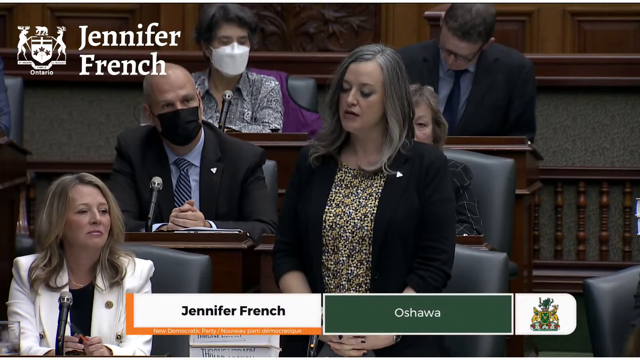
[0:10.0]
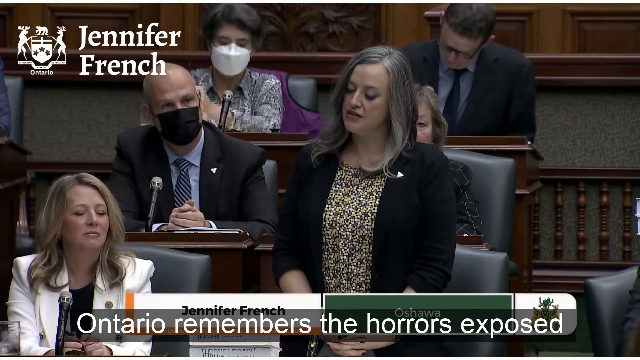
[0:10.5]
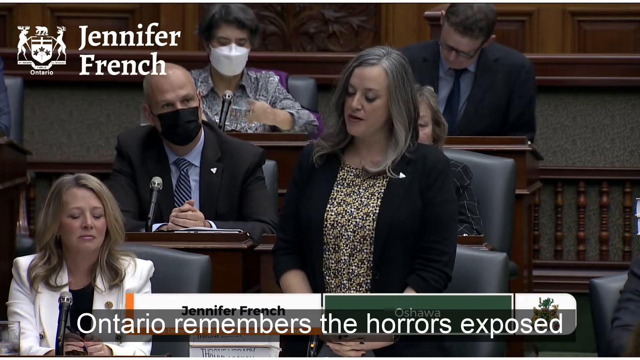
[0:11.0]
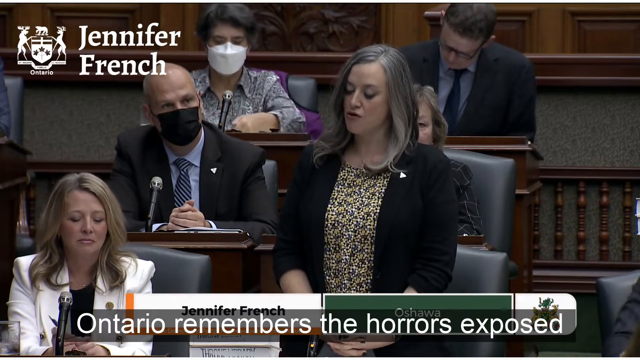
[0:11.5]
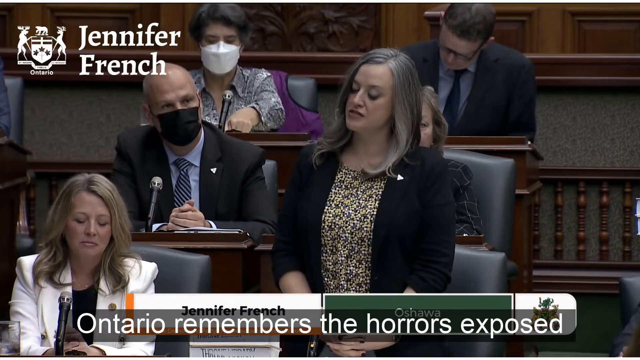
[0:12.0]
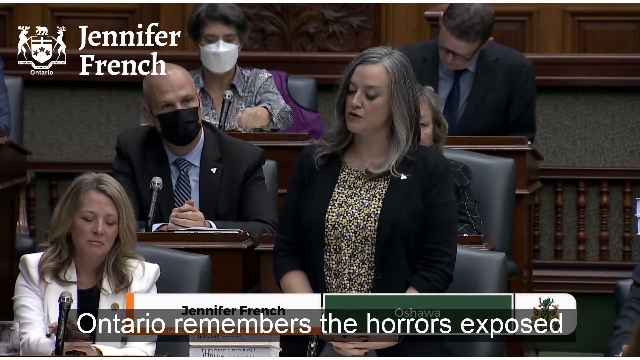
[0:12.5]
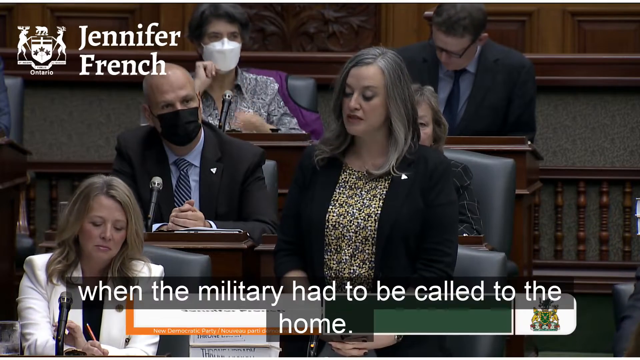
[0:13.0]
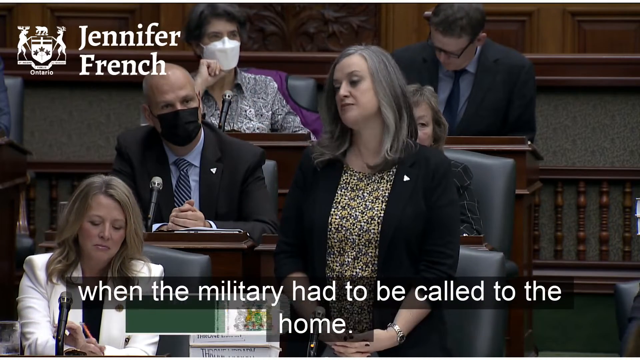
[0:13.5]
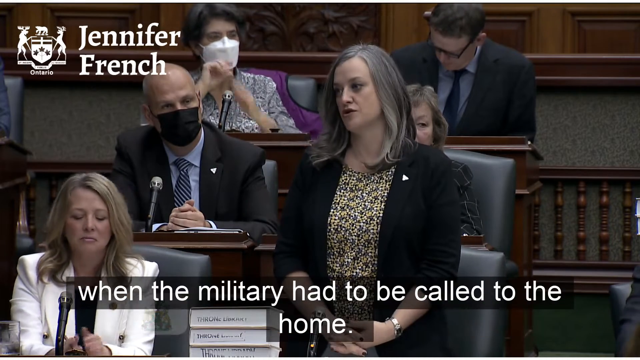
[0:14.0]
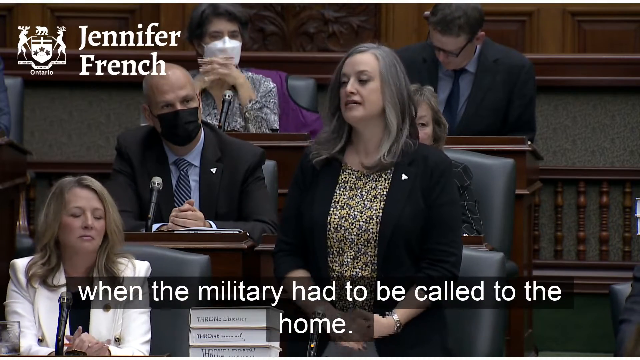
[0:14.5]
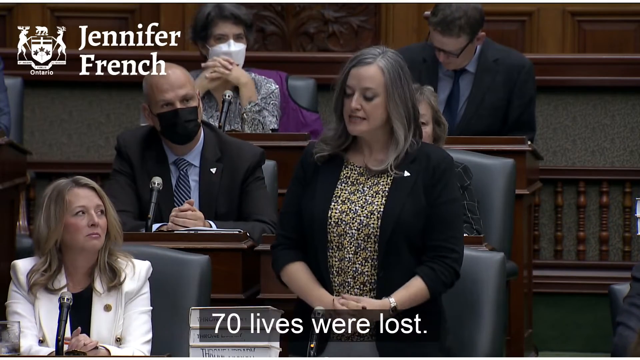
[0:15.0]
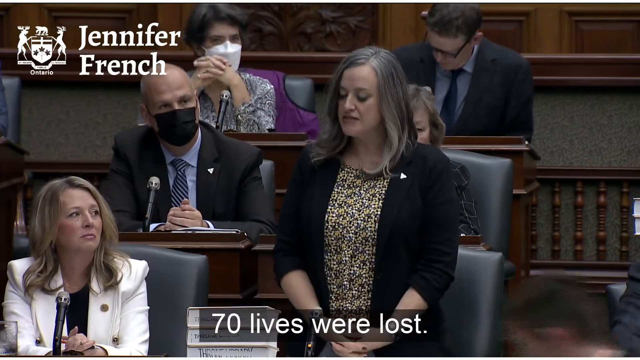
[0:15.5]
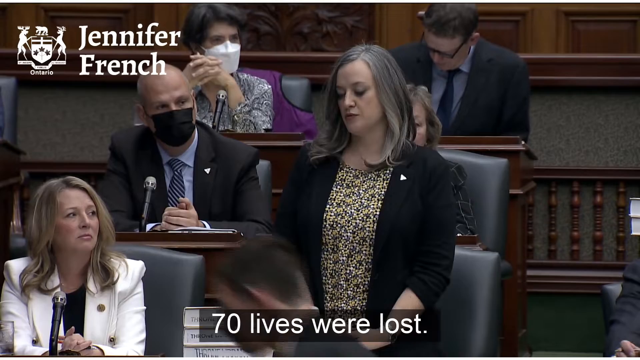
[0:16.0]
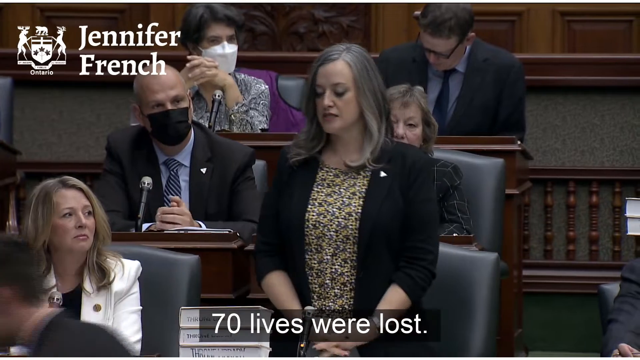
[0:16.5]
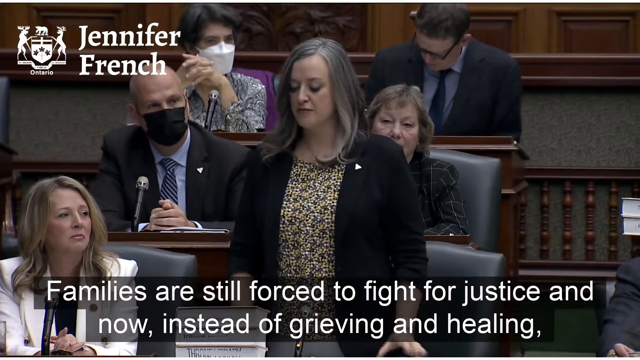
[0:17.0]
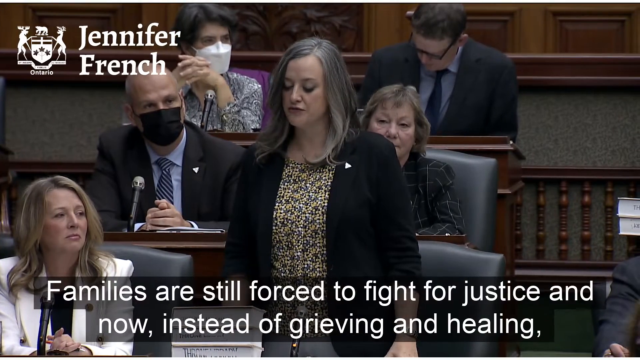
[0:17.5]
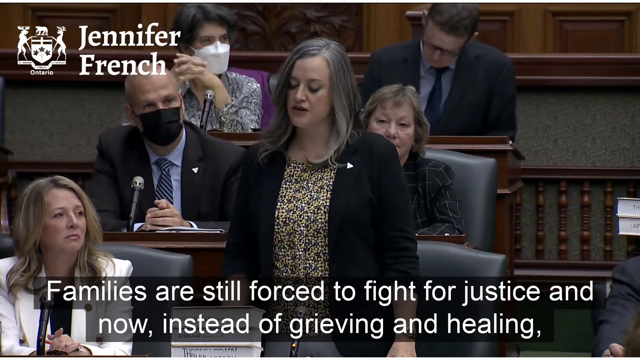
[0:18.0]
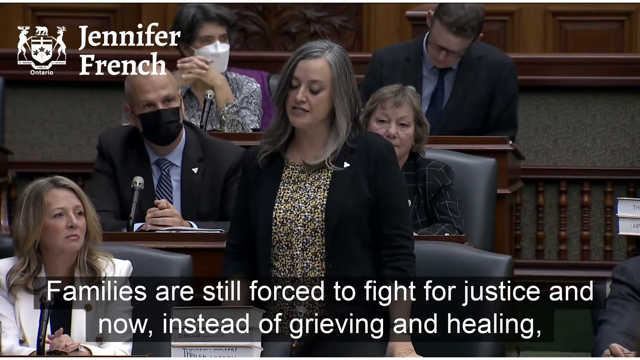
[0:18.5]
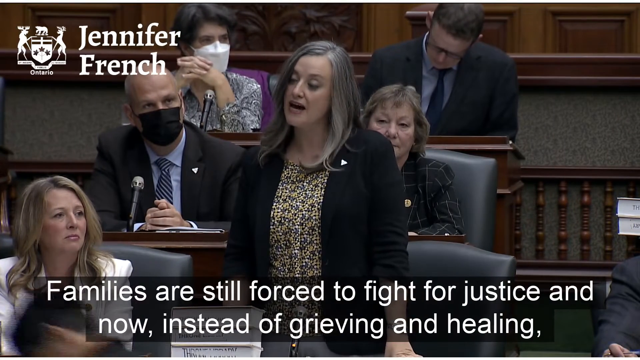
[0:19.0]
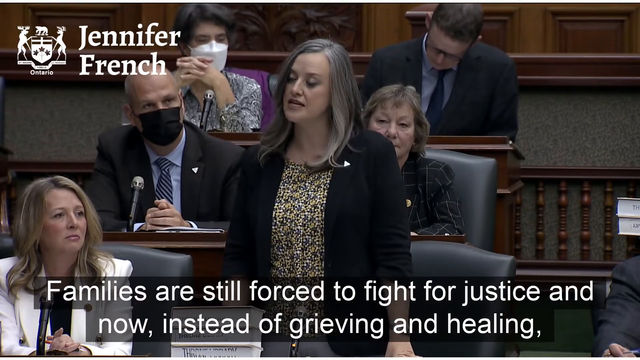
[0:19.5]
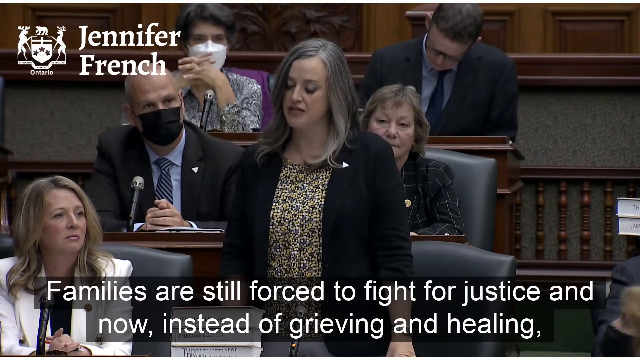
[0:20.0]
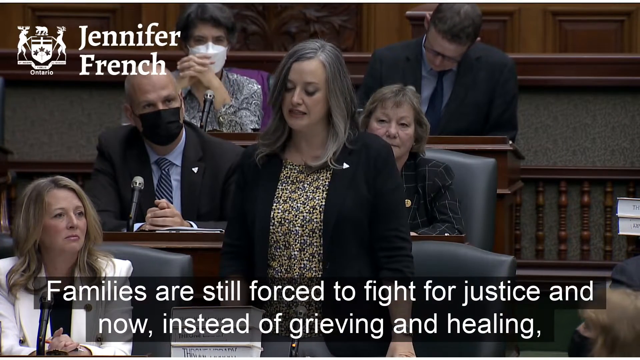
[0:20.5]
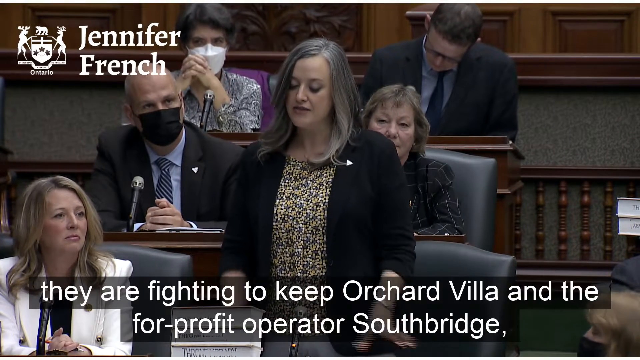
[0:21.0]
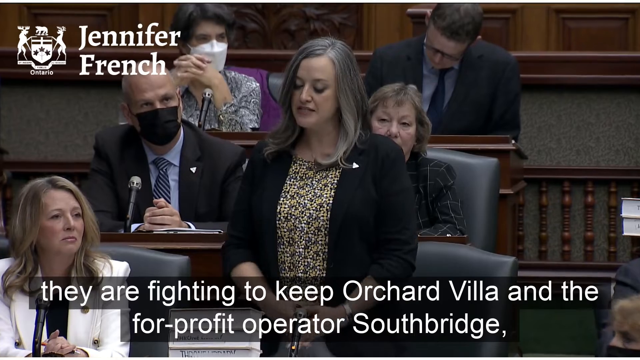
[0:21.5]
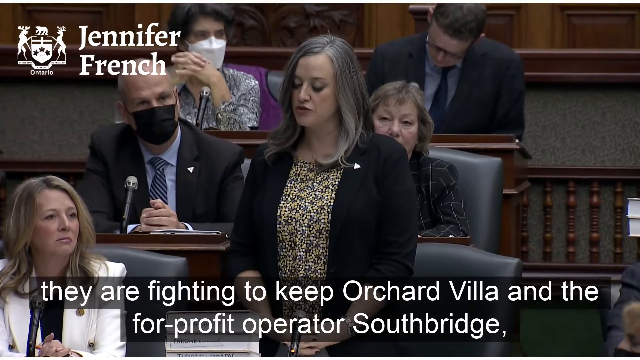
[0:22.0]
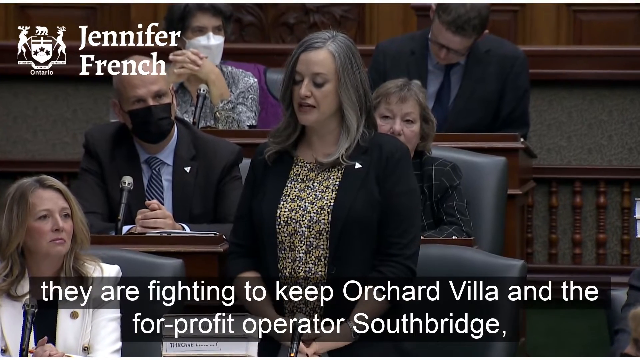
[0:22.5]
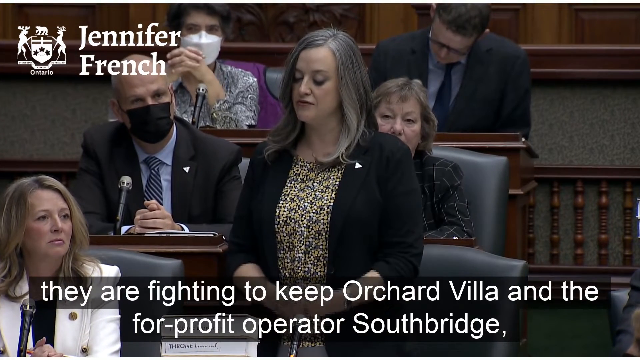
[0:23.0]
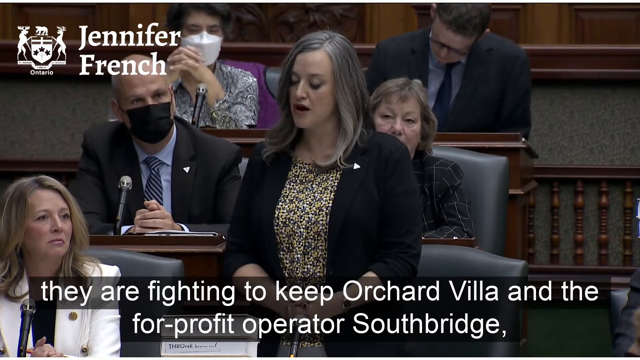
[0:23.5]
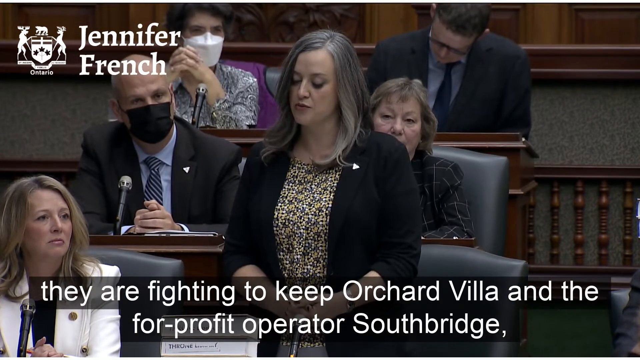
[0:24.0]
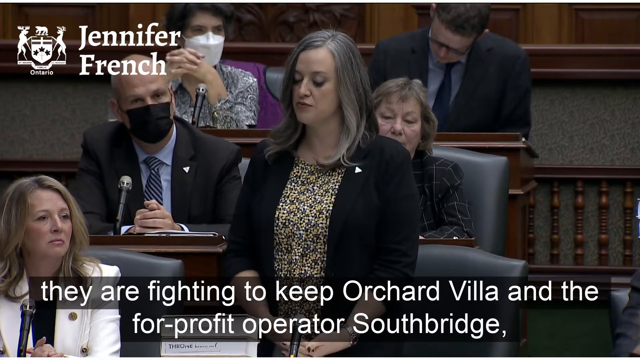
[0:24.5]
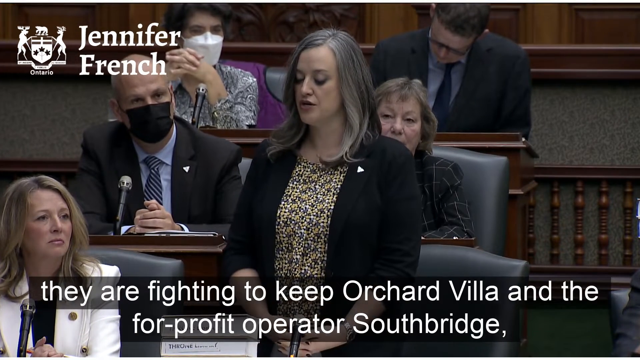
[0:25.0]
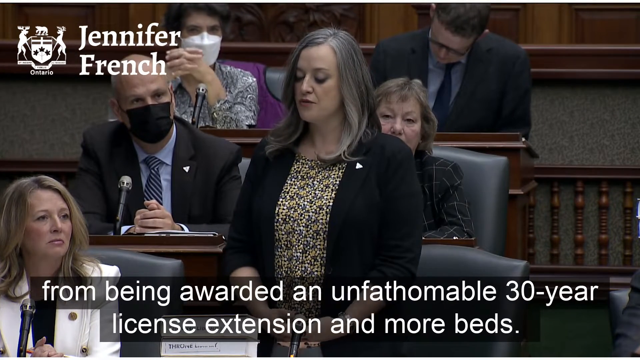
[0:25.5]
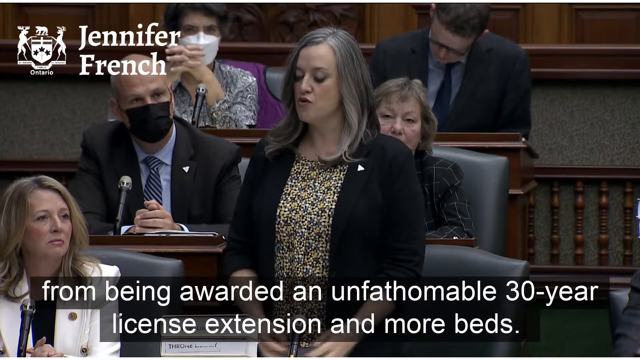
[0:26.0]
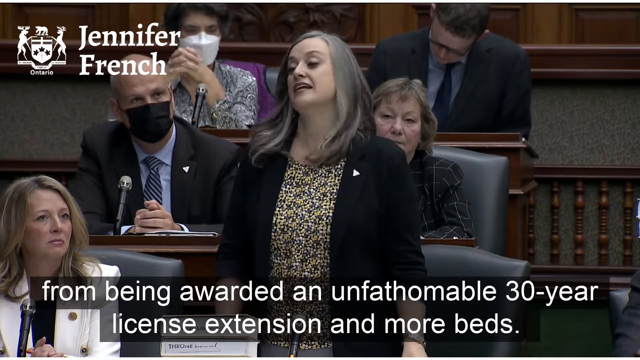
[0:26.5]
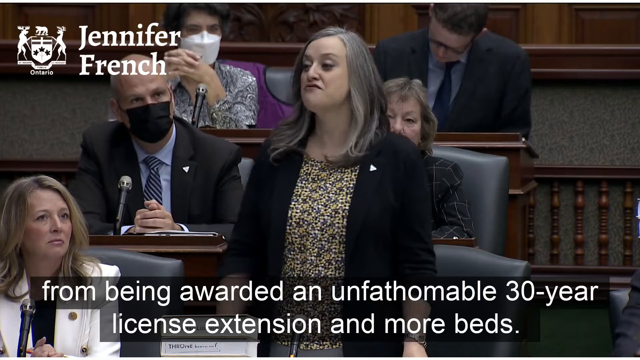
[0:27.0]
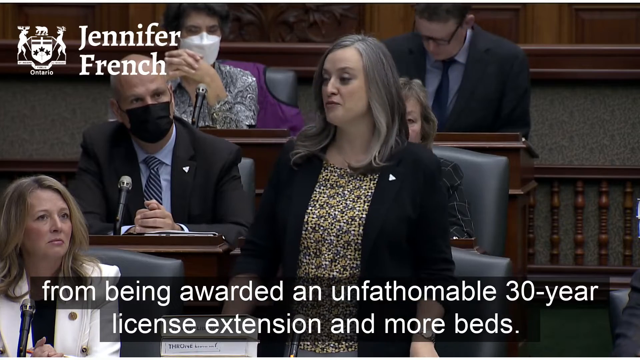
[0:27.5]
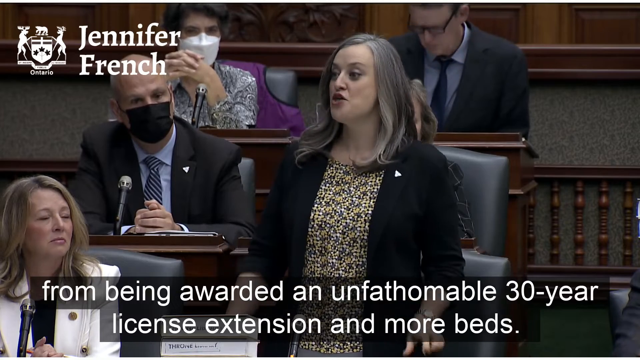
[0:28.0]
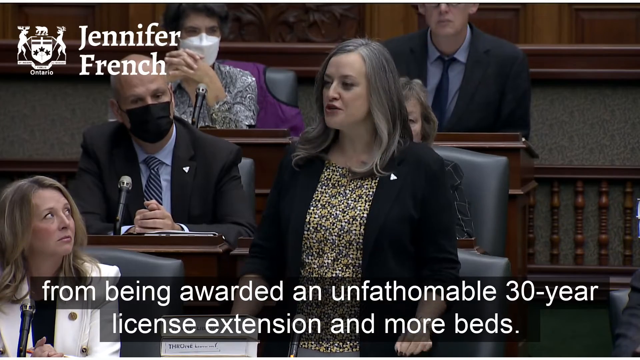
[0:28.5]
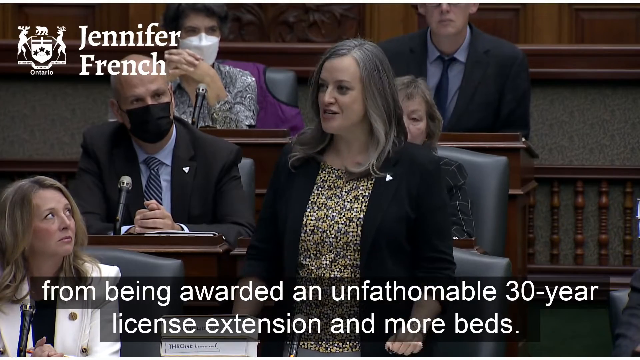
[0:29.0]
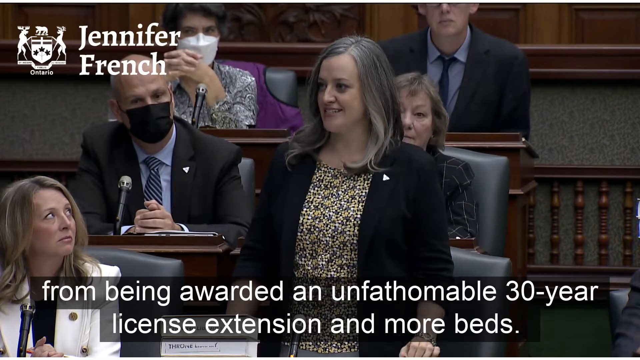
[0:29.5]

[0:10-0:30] A woman stands at her desk, wearing a flowered print top with a black jacket; she has below-shoulder-length grey hair parted to the side. To the left is a woman with blonde hair in a white business jacket. Behind her is a bald man in a suit wearing a black face mask, and behind him is a woman with short brown hair in a flowered button-down business top. Directly behind the standing woman is a woman with short brown hair in a plaid jacket, and behind her is a man with short brown hair and glasses wearing a suit. At the bottom of the screen, text reads "Jennifer French", and a green text box reads "Oshawa." The standing woman is speaking, and the text at the bottom reads "Ontario remembers the horrors exposed. When the military had to be called to the home, 70 lives were lost. Families are still forced to fight for justice, and instead of grieving and healing, they are fighting to keep Orchard Villa and the for-profit operator Southbridge from being awarded an unfathomable 30-year license extension and more beds."